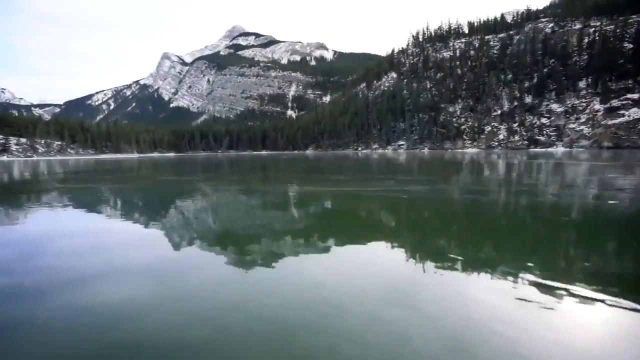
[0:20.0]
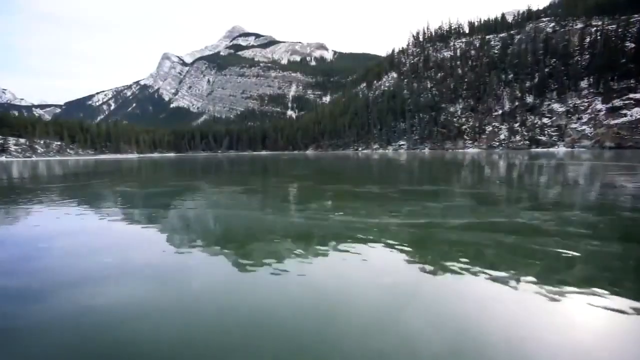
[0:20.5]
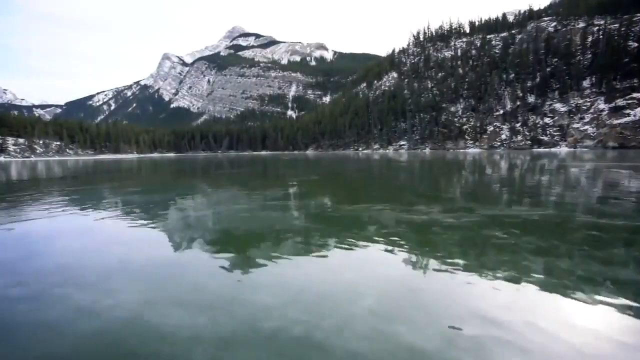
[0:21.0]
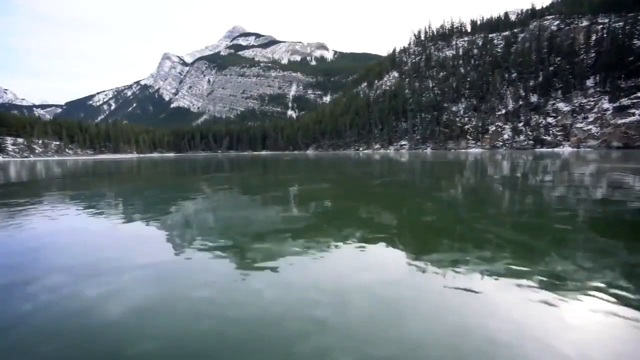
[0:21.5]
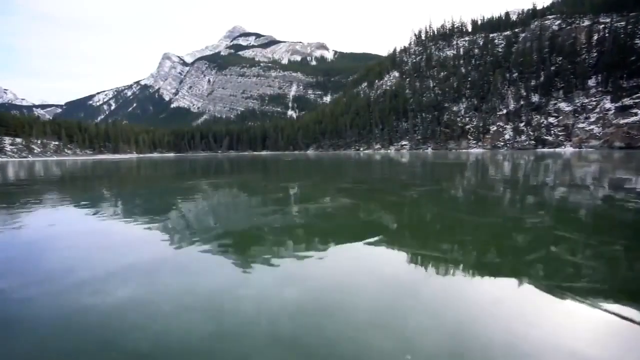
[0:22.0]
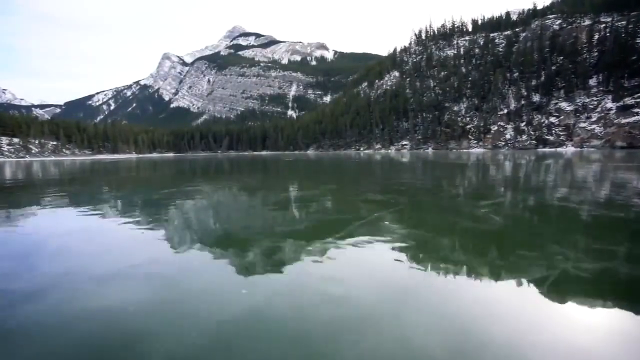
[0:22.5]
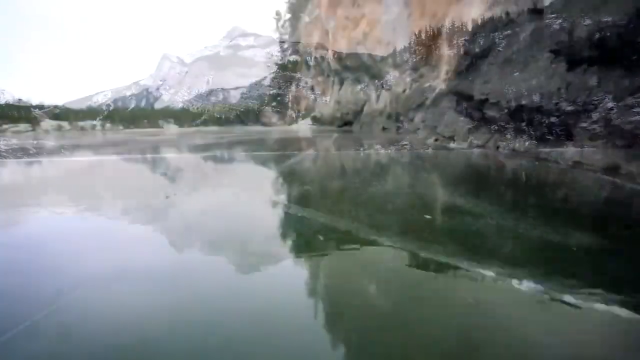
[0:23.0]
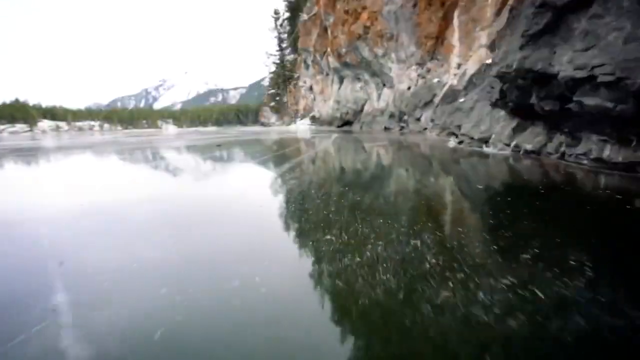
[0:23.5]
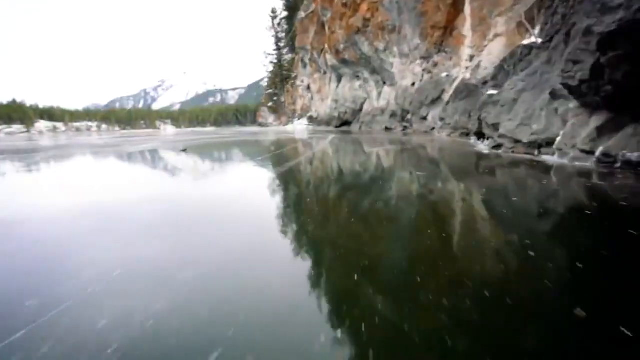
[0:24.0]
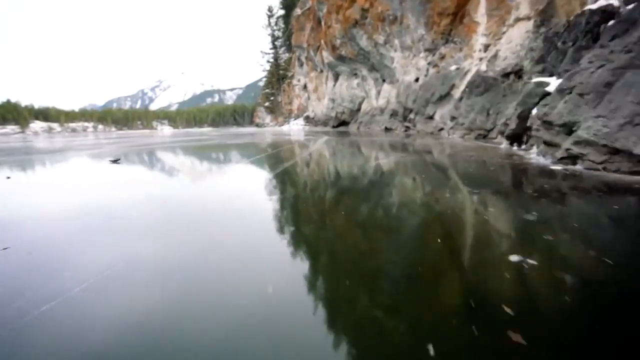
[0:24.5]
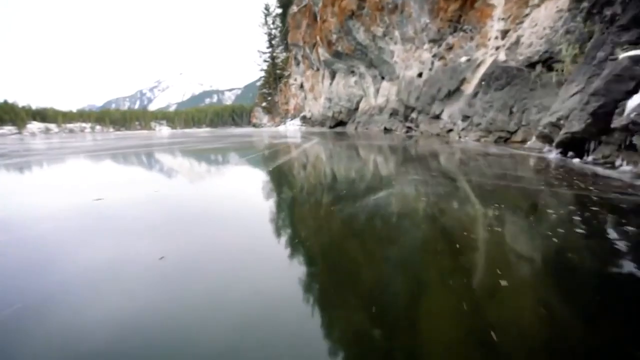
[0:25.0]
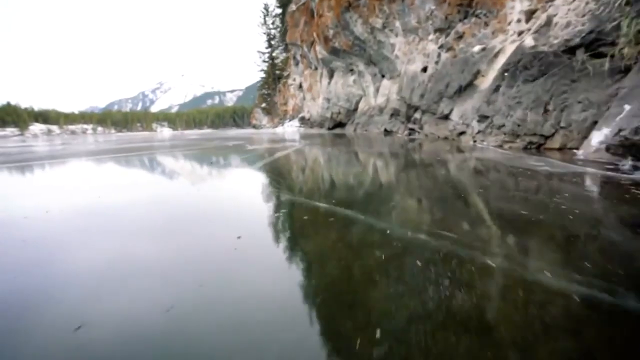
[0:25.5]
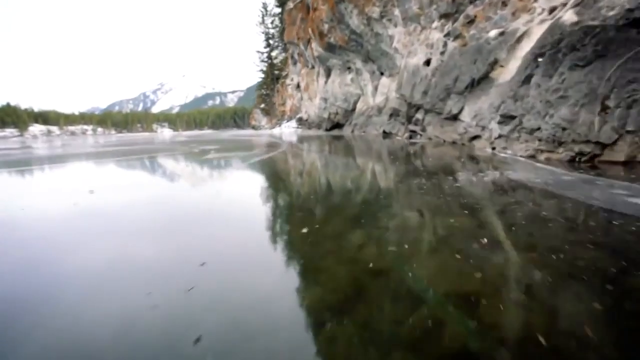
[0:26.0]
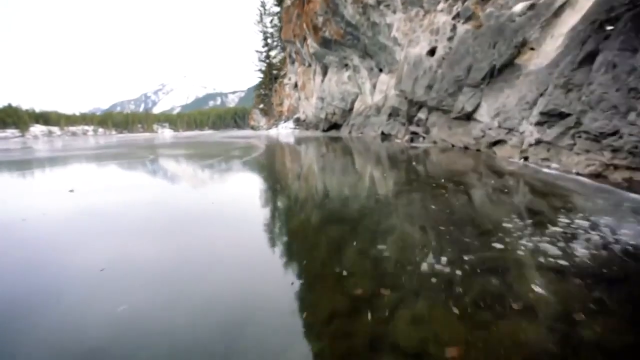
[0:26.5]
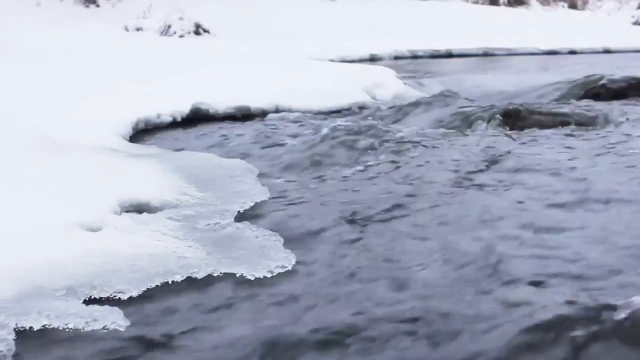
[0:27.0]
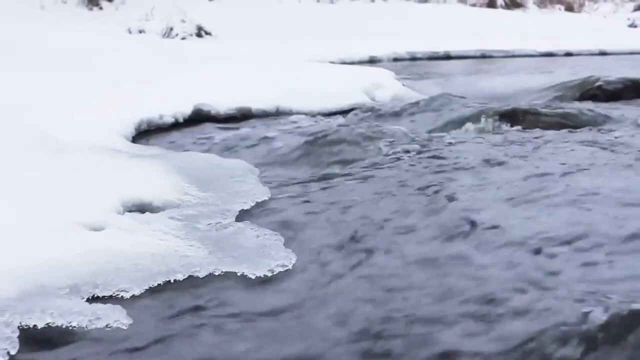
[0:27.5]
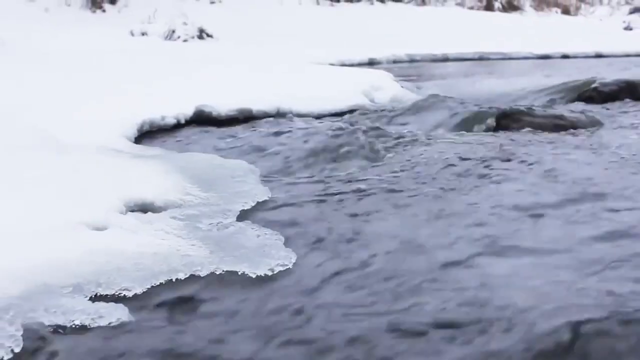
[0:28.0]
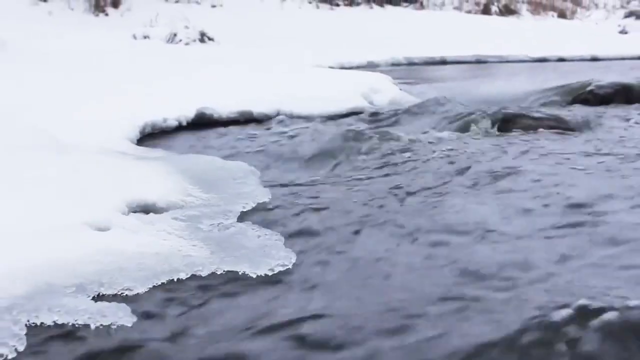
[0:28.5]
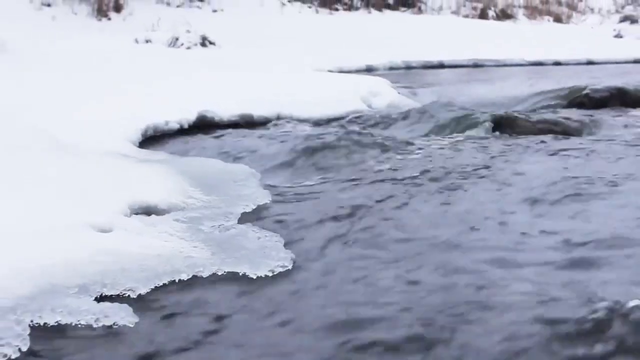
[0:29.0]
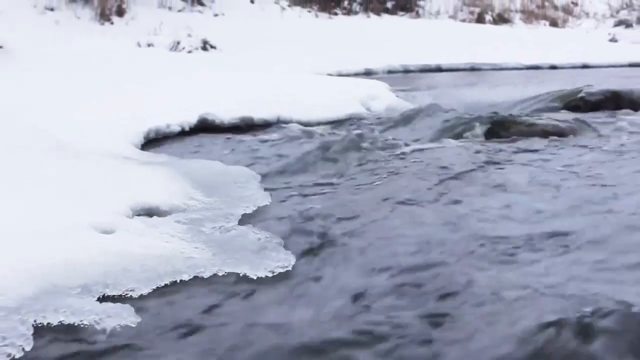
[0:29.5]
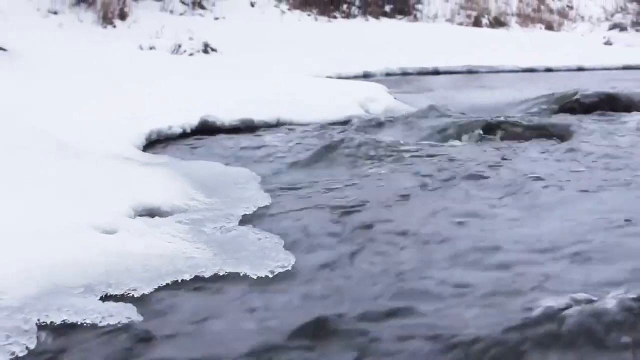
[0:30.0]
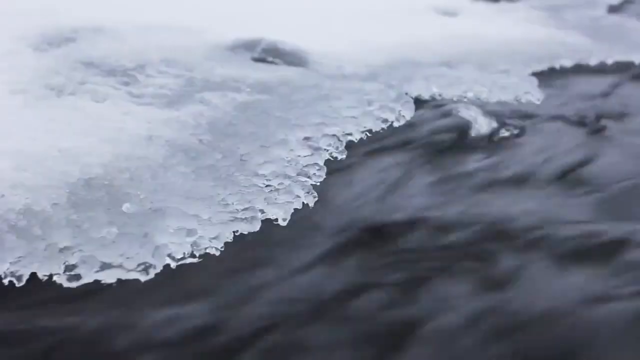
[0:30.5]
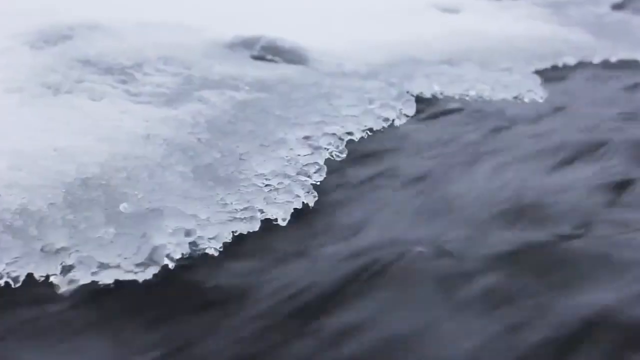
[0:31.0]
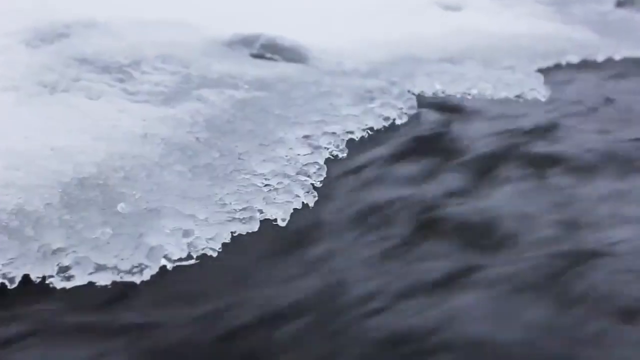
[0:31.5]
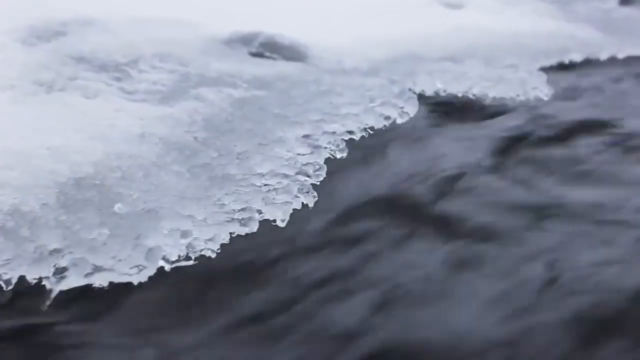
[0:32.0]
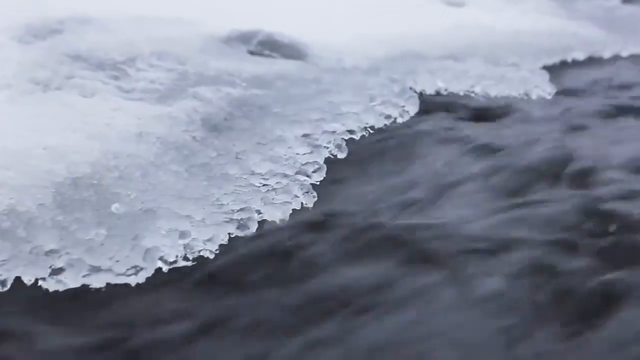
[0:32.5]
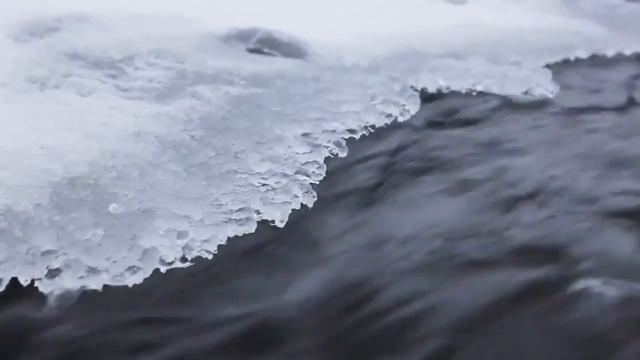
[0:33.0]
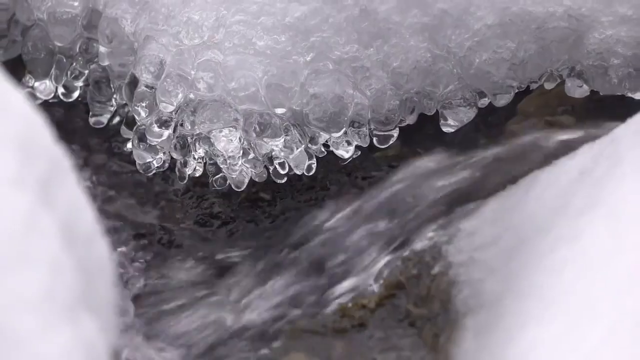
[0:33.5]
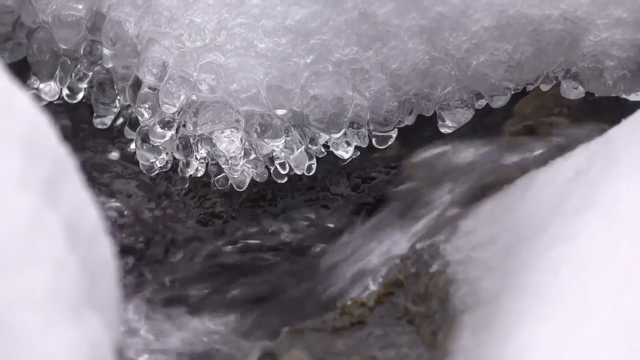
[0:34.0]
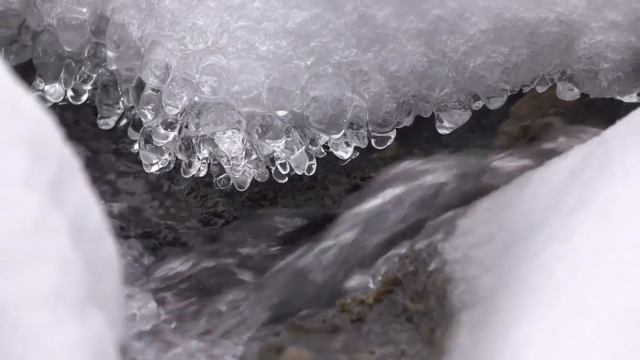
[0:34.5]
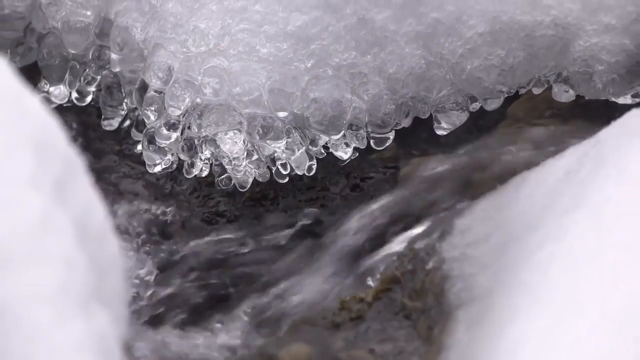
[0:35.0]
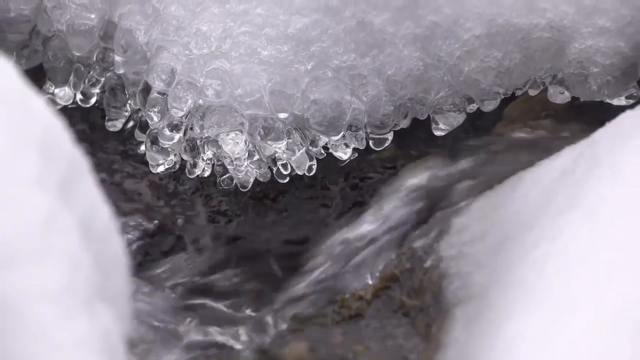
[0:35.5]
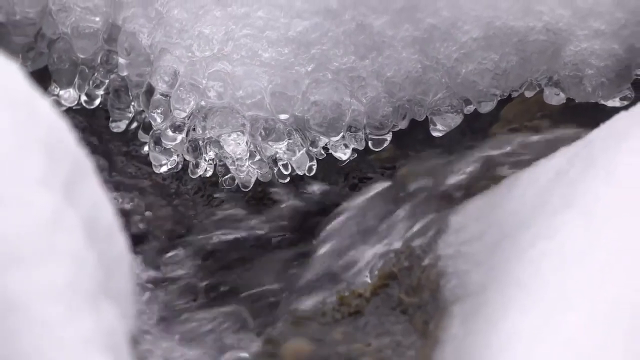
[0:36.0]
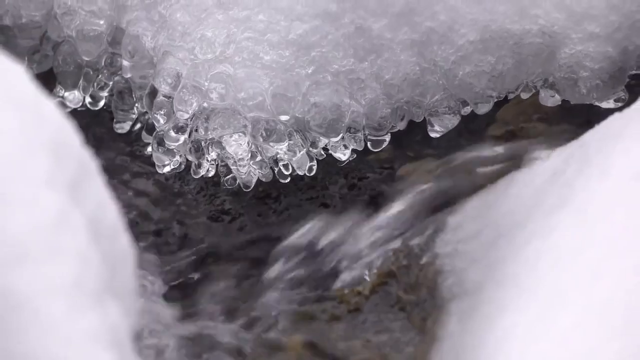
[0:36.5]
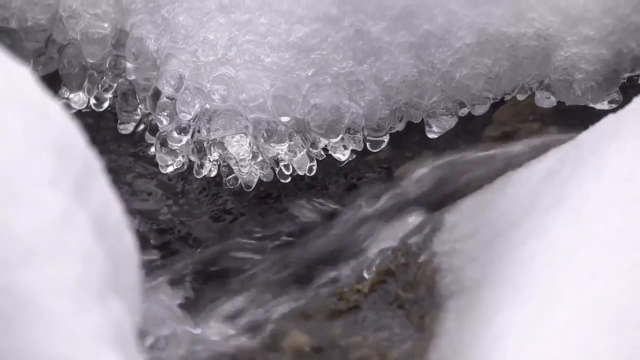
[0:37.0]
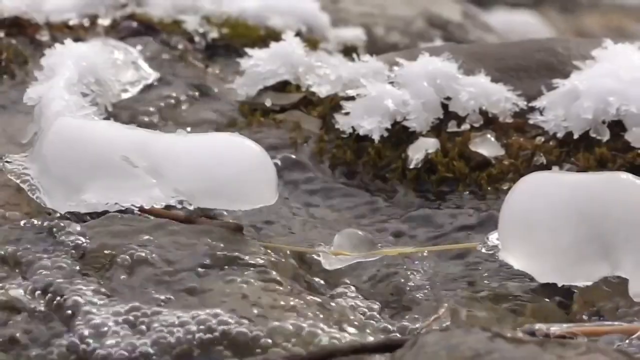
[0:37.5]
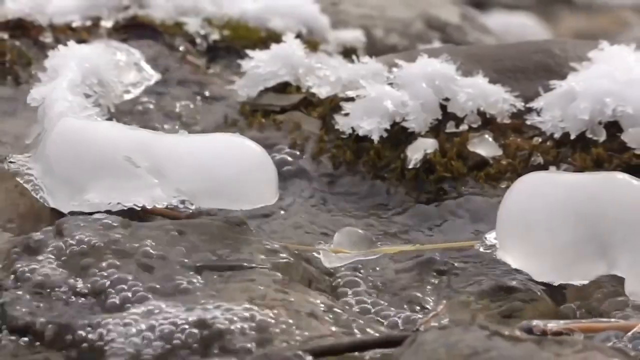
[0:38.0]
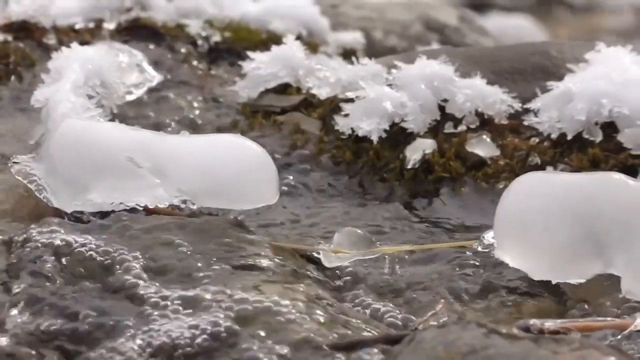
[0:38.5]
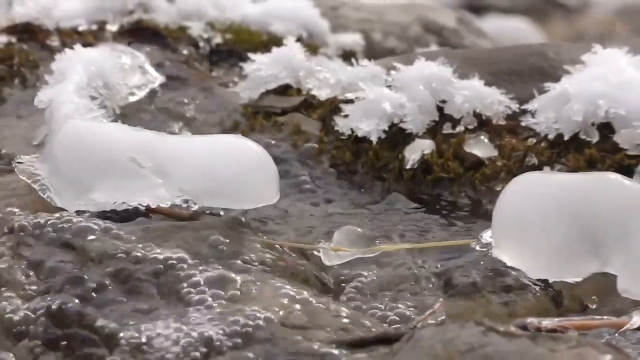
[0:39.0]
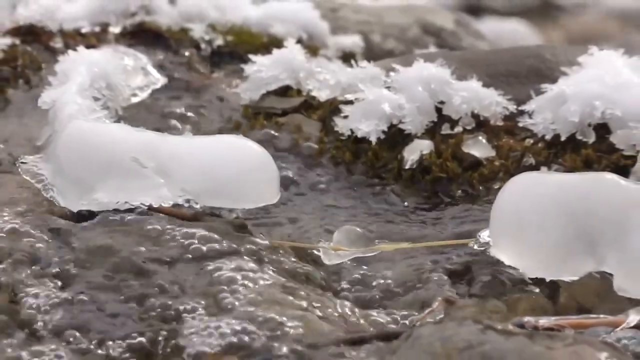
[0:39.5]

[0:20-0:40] The camera seems to be moving over a lake, just above its surface. In front, there are trees along the belt of the lake, and far beyond the trees there is a huge mountain with patches of visible green land as well as ice. The camera views the mountain where it touches the water. The next shot shows water flowing rapidly on the ground with ice; the water flows below an ice crust that fades away. Another camera angle shows water flowing between icy rocks.